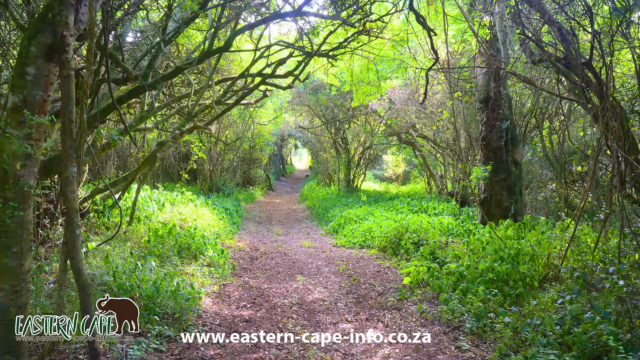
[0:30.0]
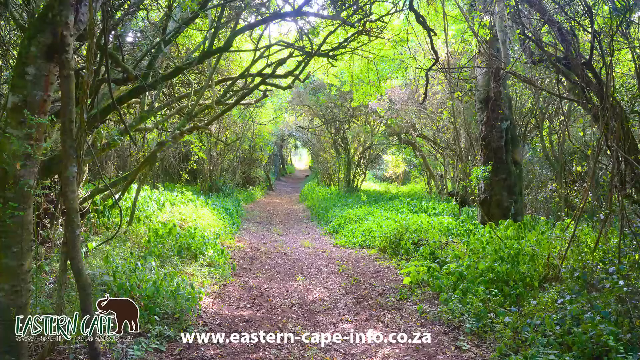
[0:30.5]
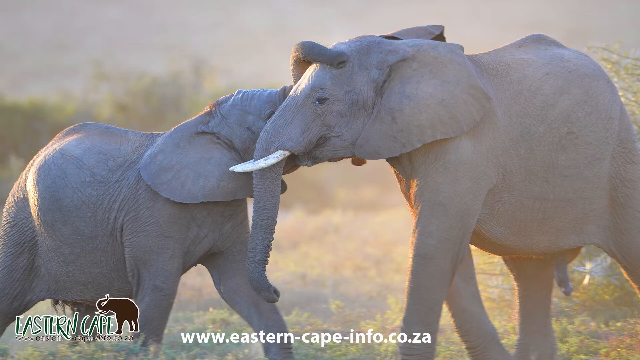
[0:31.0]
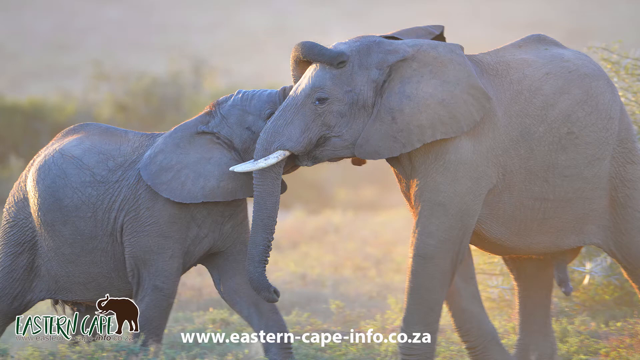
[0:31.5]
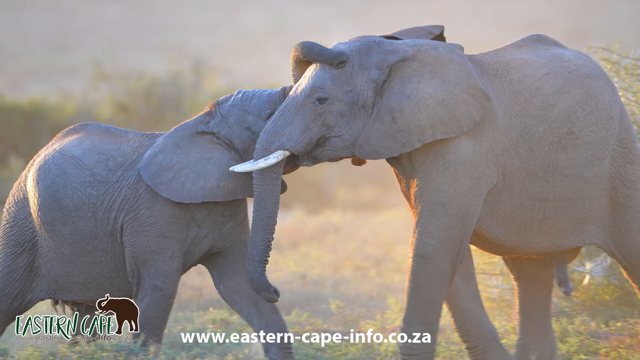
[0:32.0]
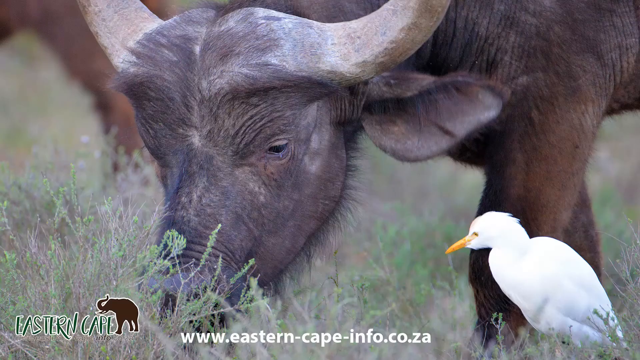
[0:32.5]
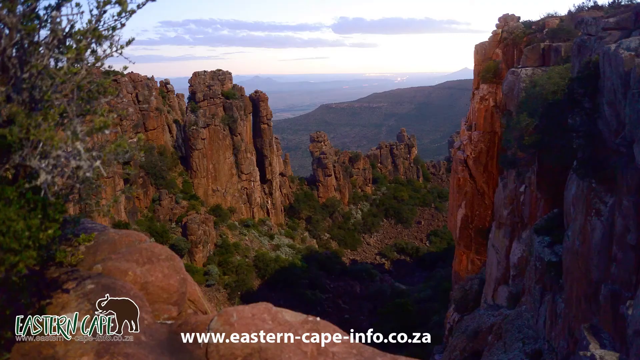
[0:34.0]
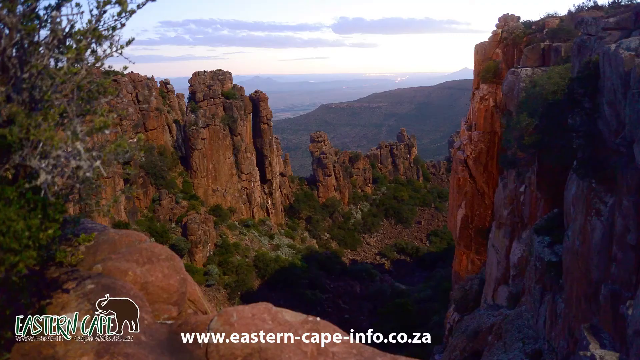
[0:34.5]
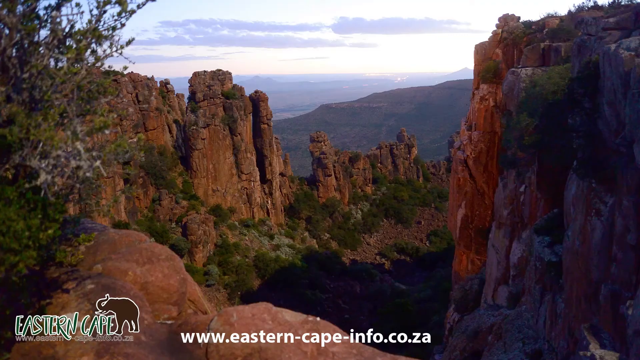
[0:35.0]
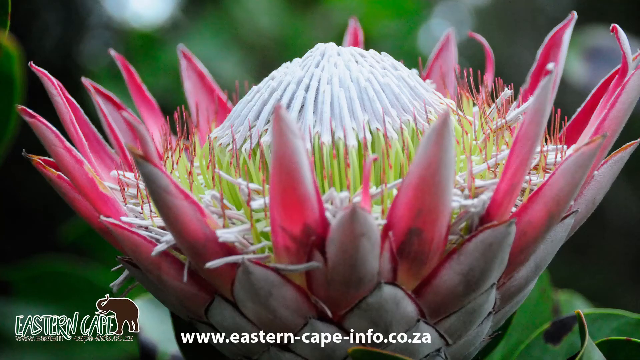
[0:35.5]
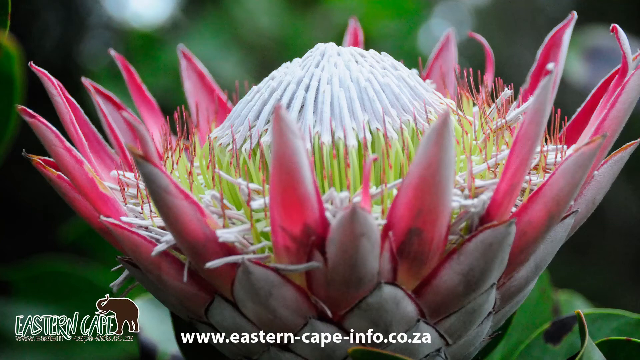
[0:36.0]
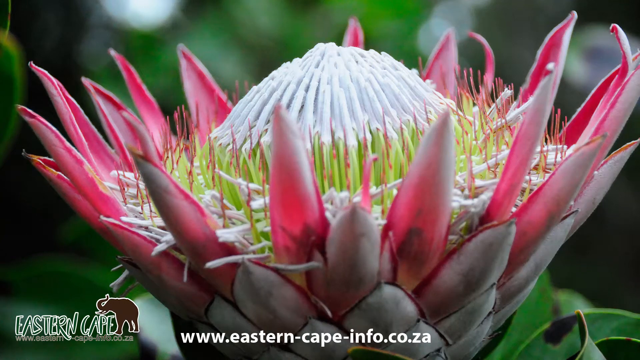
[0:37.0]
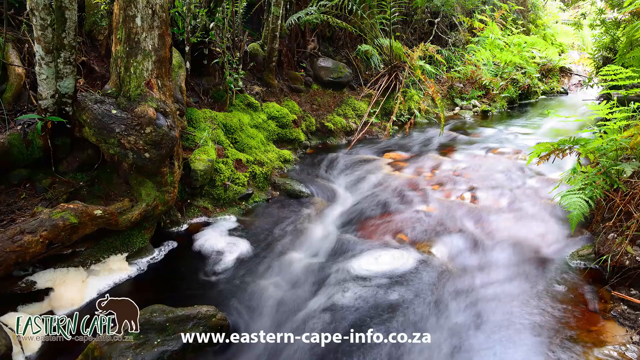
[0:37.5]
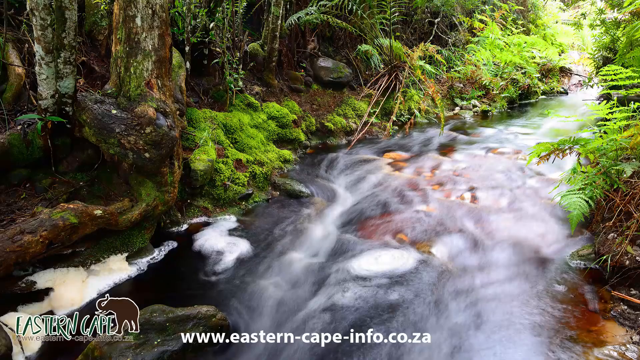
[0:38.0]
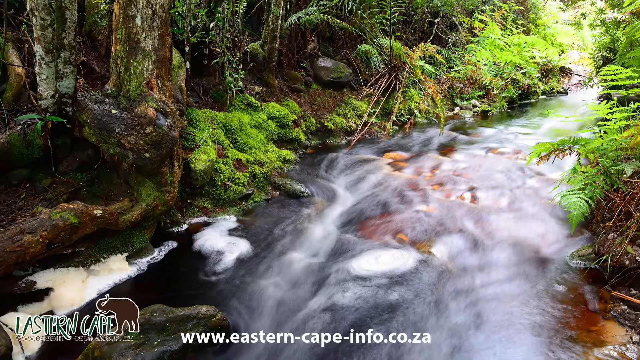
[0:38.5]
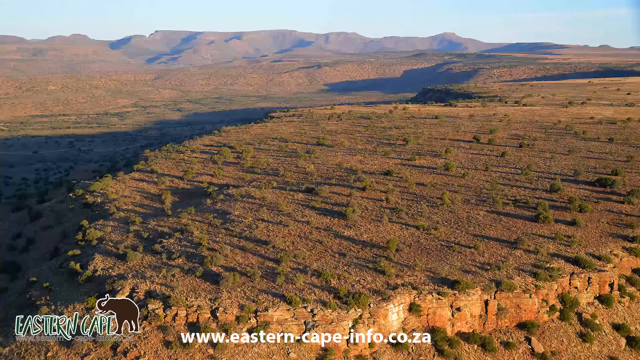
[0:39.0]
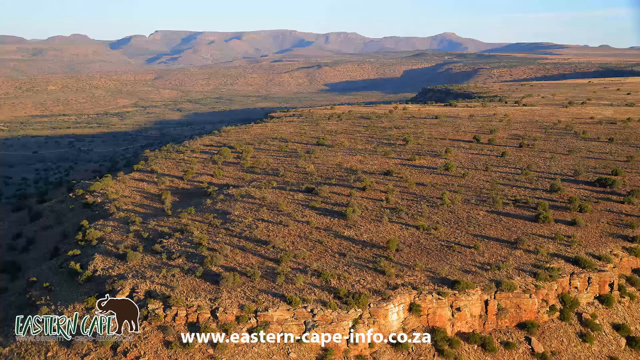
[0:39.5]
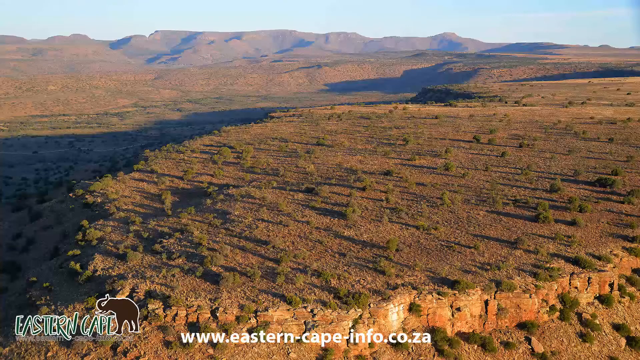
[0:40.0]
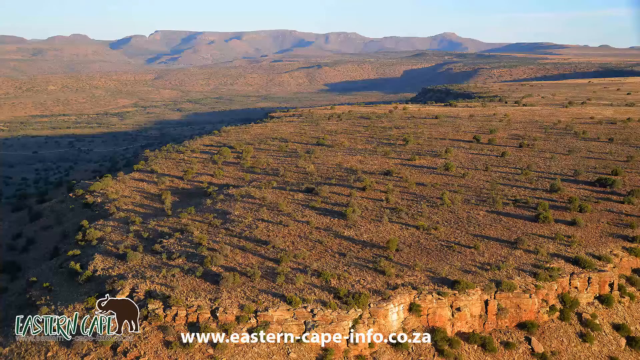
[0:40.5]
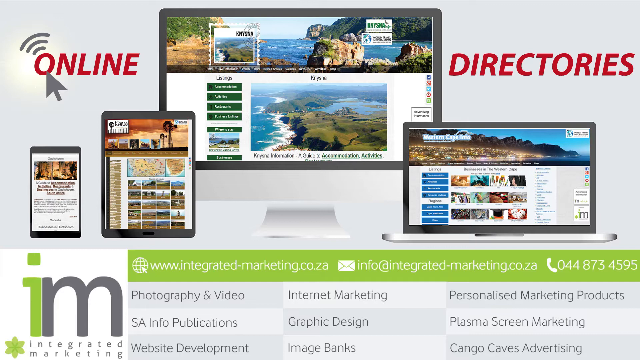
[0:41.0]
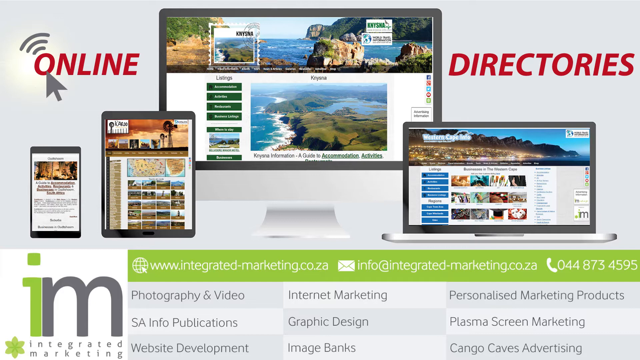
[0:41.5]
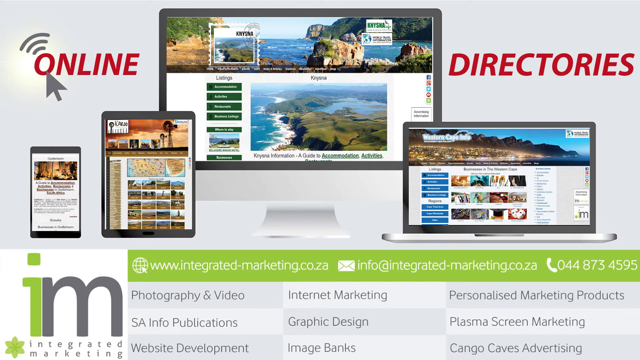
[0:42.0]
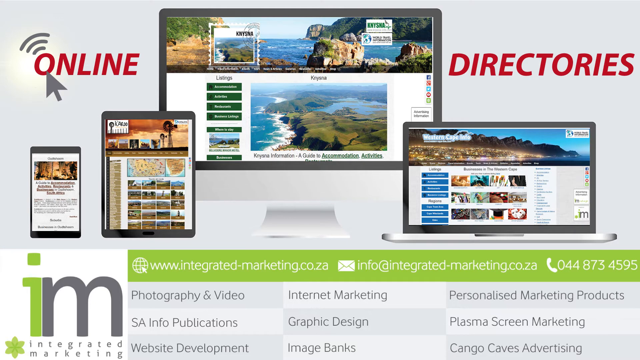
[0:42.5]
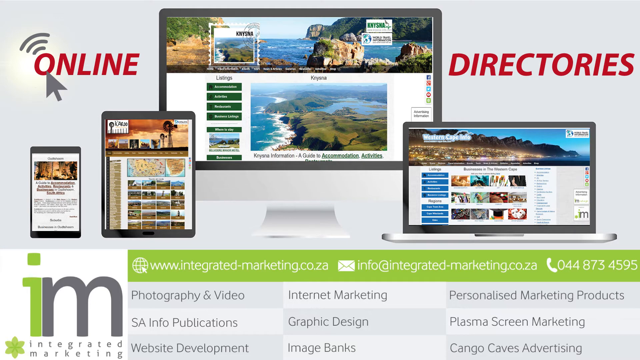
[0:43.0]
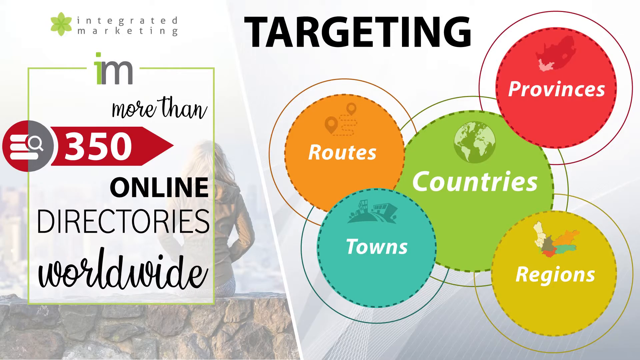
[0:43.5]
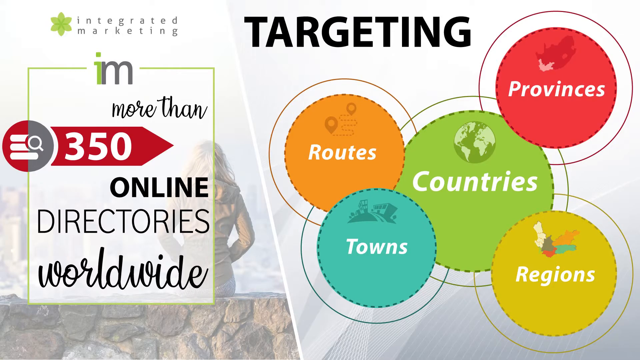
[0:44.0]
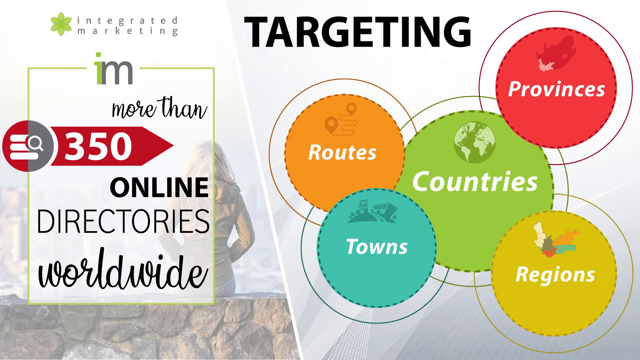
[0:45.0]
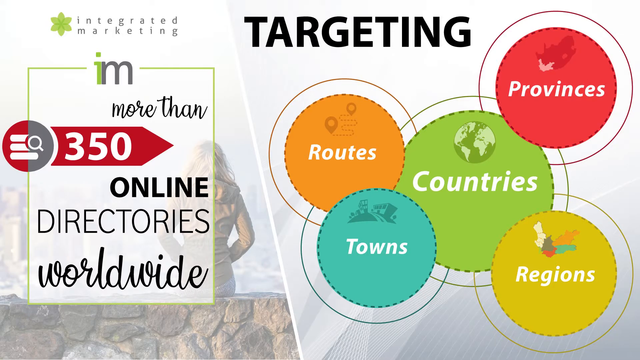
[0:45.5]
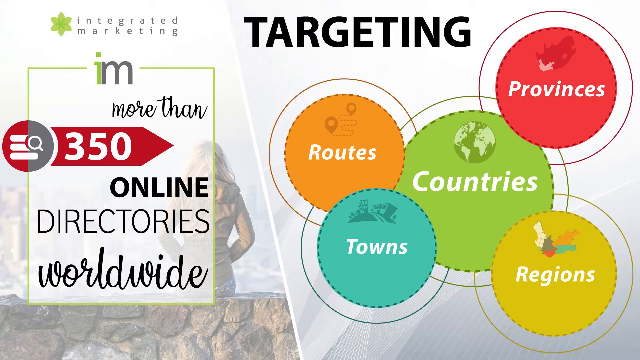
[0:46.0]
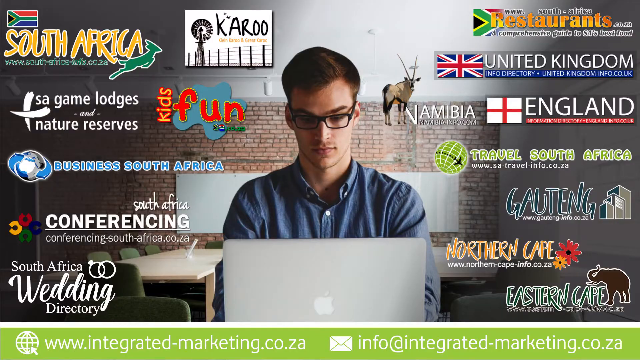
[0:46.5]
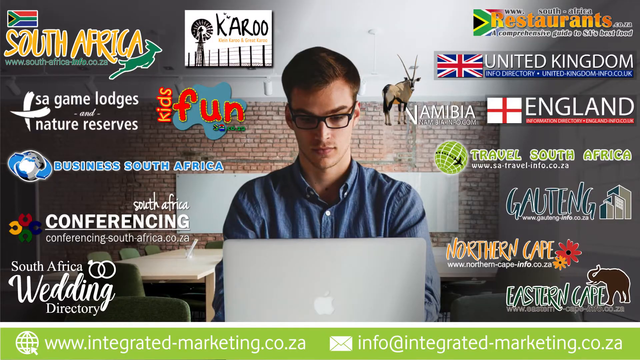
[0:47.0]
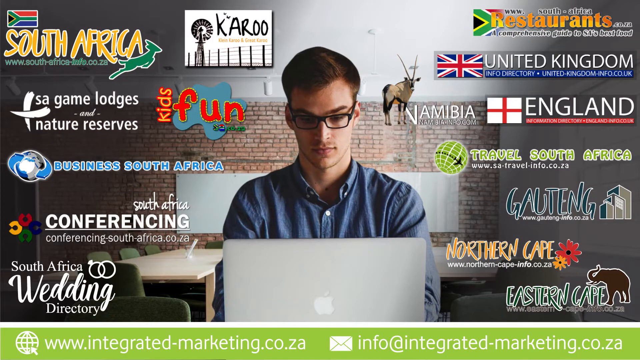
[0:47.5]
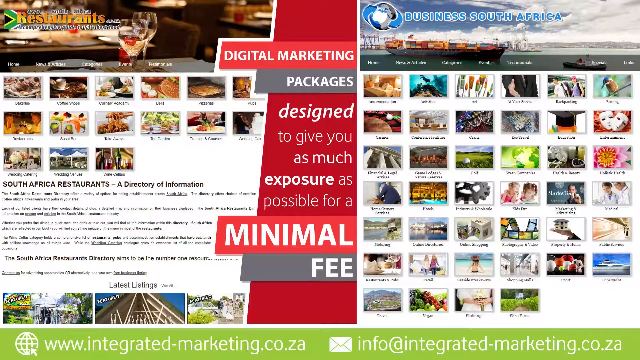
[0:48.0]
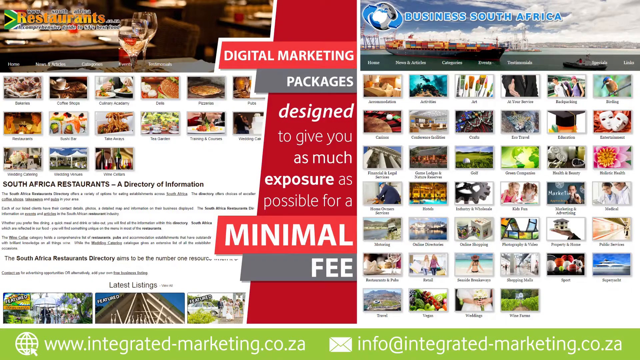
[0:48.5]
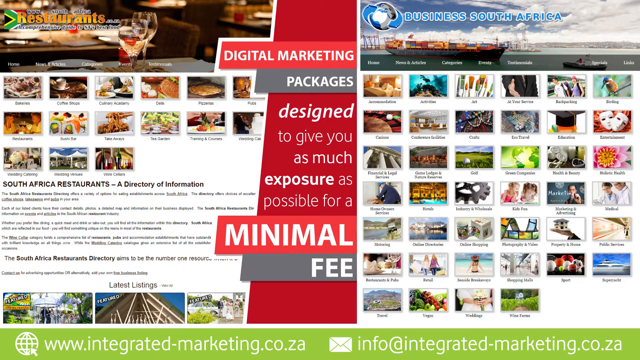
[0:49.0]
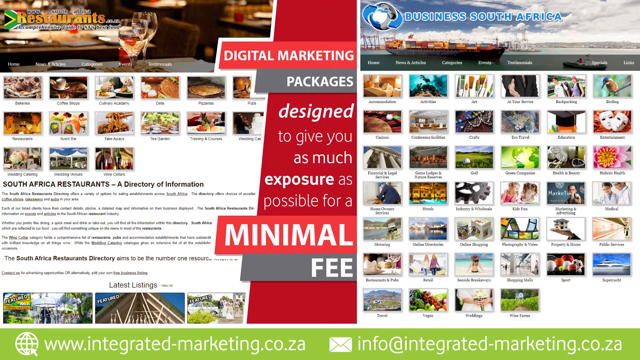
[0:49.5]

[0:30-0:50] A pathway is lined with very overgrown plants and lots of low bushes, surrounded by very tall trees that let through only a small amount of sunlight, though the scene is still very bright and green. Next, two elephants have their trunks wrapped around each other. A buffalo eats some grass, with a white bird with an orange beak standing near it. The next shot shows tall rock formations like tall mountains, with trees along the skirts at the bottom; the shot is from the perspective of a different mountain, around sunset. A pink flower has long petals that go outwards, and its inside has some green and white that resemble a coconut. Then a white-water river with rapids appears, with a lot of moss and plants along its outskirts. Next is a savannah that is very orange and bare, mostly with dry plants and some mountains in the back. A graphic related to online directories promotes integrated marketing and shows contact details. Another graphic about integrated marketing says it is in more than 350 online directories worldwide and targets routes, countries, provinces, towns, and regions, using various colors. Next, a man uses a Mac laptop facing the camera; he wears a blue long-sleeve top and black glasses. Around his silhouette are many travel brands or countries and their logos, such as United Kingdom, England, South Africa, South Africa wedding, Northern Cape, and Eastern Cape. Another graphic shows two screenshots side by side, one saying "restaurants" and the other "business South Africa", with a quote in the middle reading "digital marketing packages designed to give you as much exposure as possible for a minimal fee".